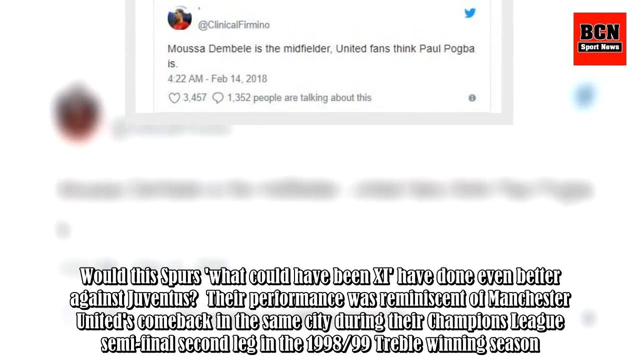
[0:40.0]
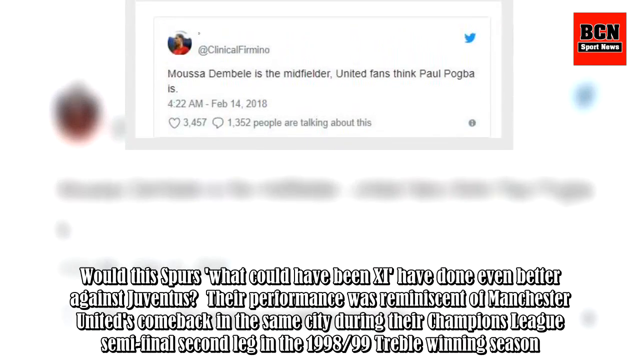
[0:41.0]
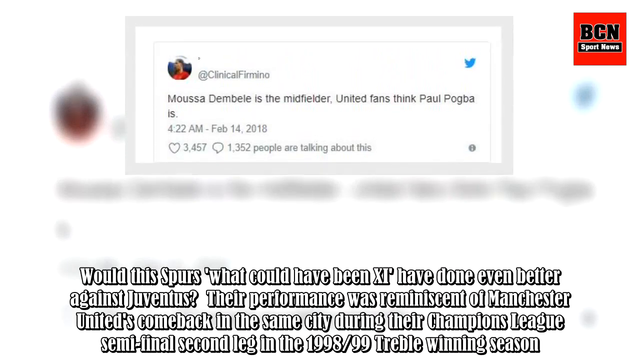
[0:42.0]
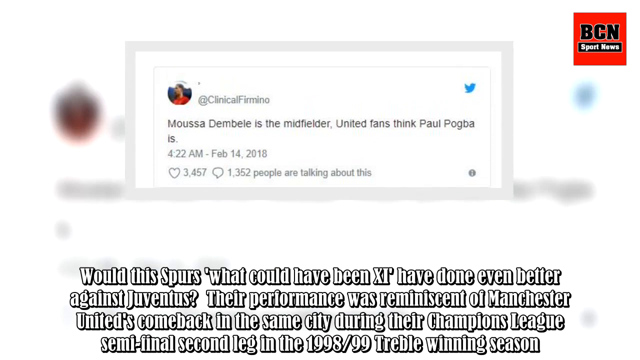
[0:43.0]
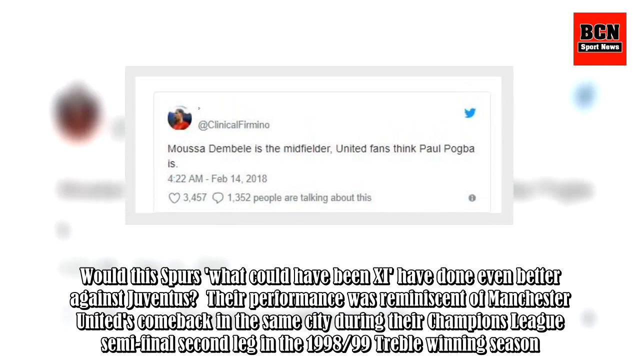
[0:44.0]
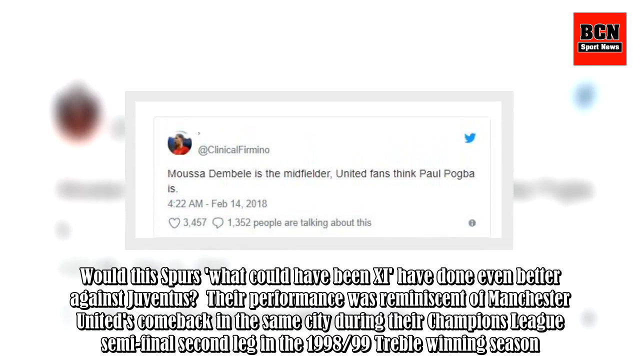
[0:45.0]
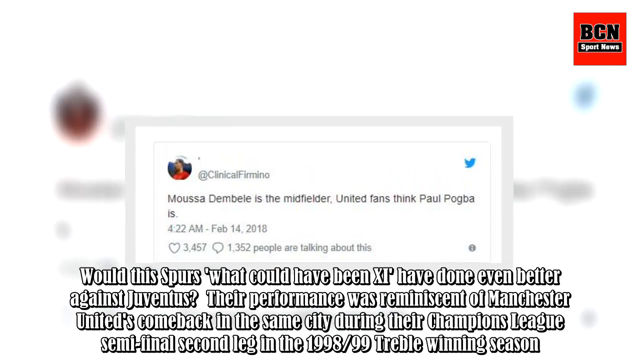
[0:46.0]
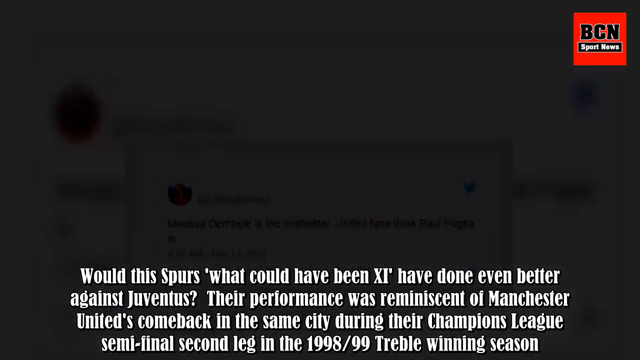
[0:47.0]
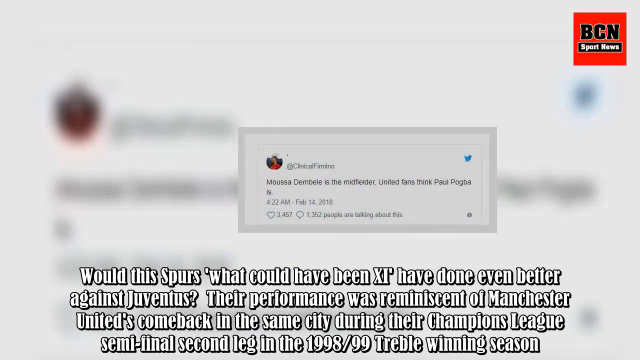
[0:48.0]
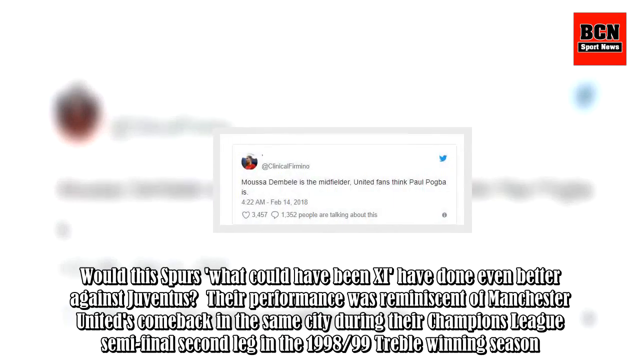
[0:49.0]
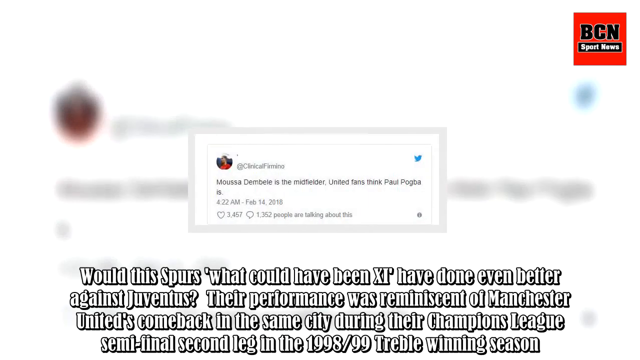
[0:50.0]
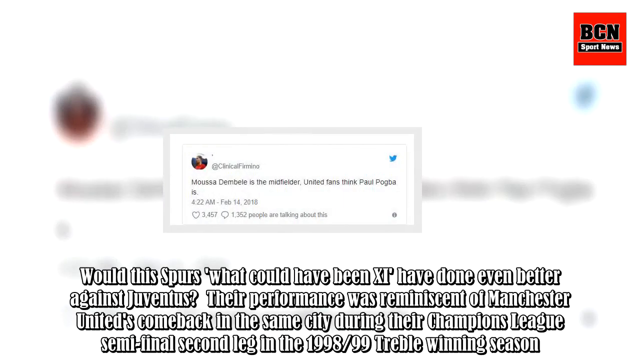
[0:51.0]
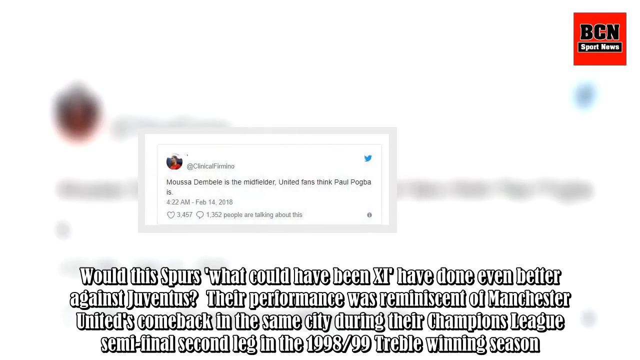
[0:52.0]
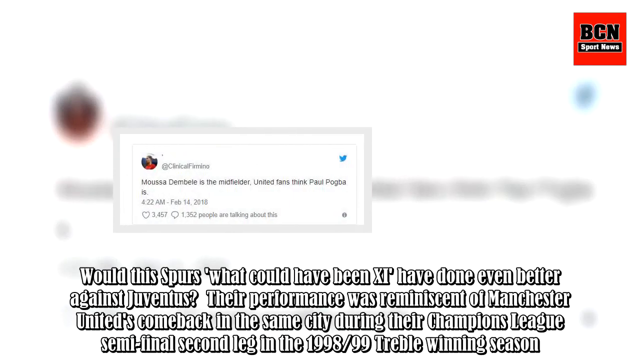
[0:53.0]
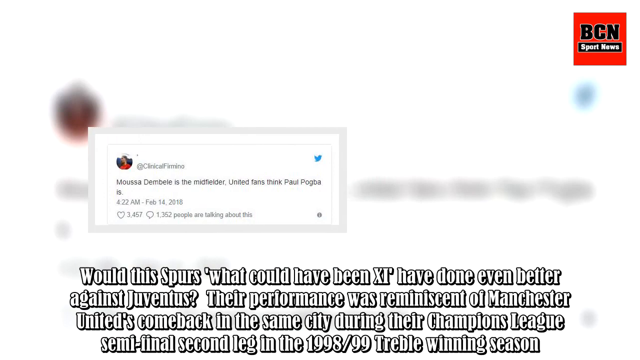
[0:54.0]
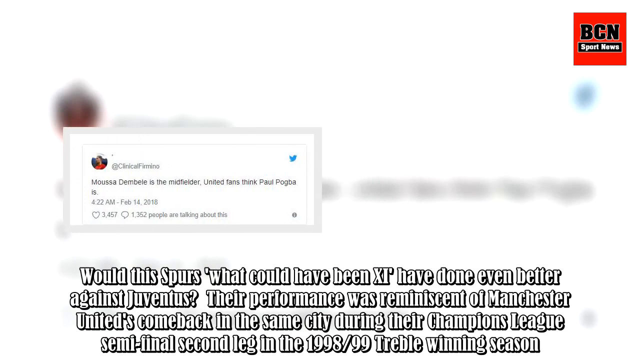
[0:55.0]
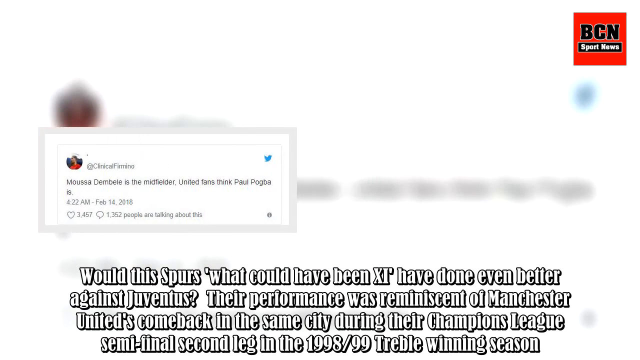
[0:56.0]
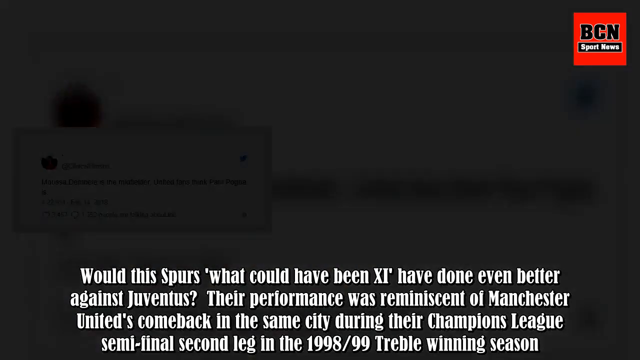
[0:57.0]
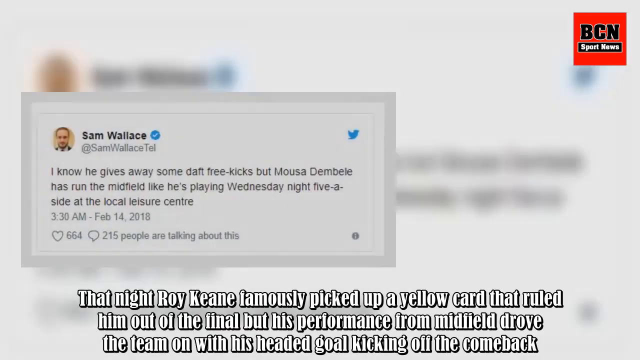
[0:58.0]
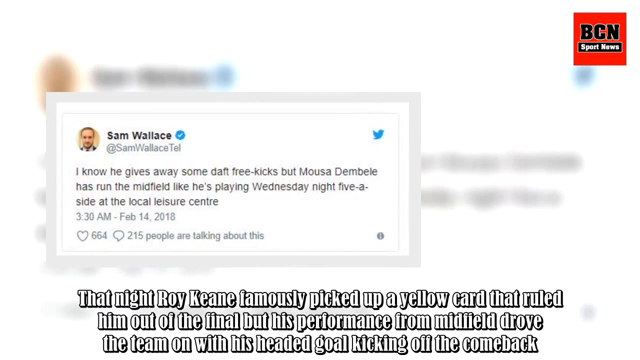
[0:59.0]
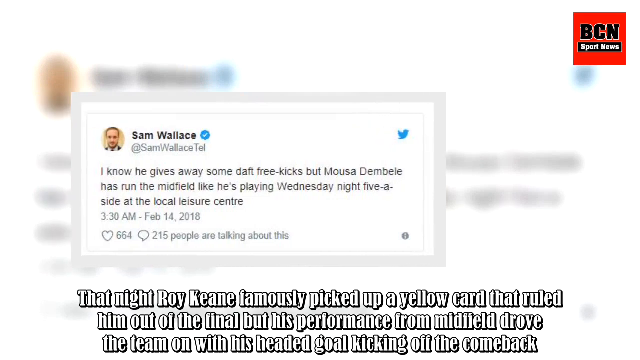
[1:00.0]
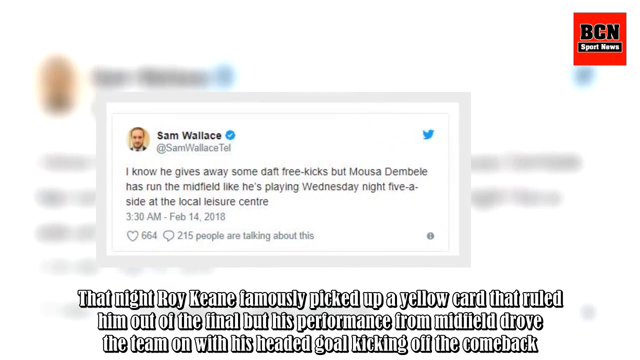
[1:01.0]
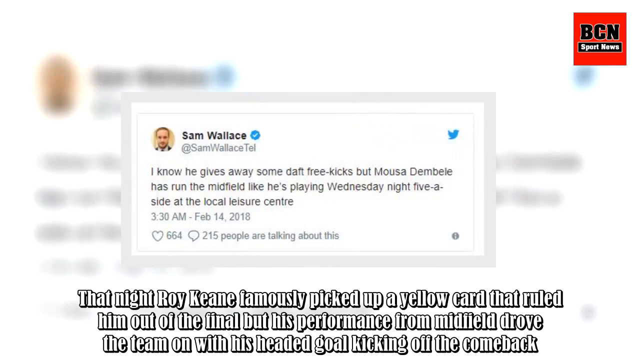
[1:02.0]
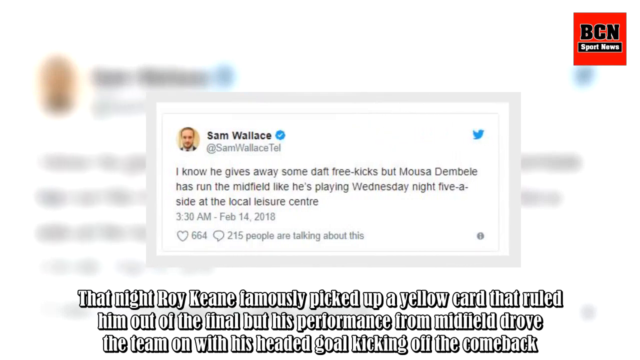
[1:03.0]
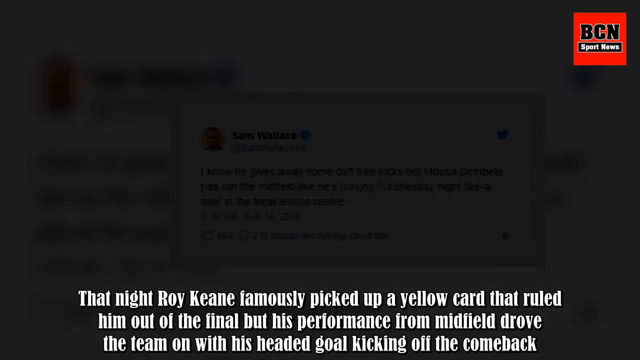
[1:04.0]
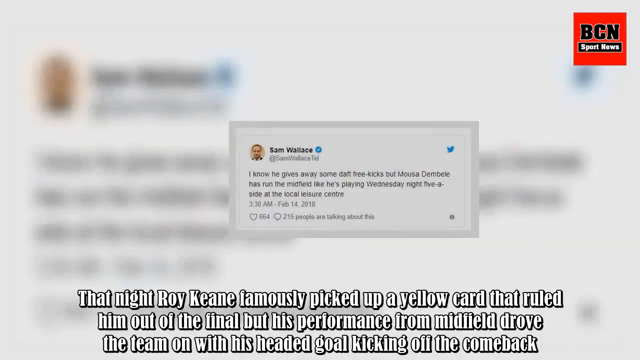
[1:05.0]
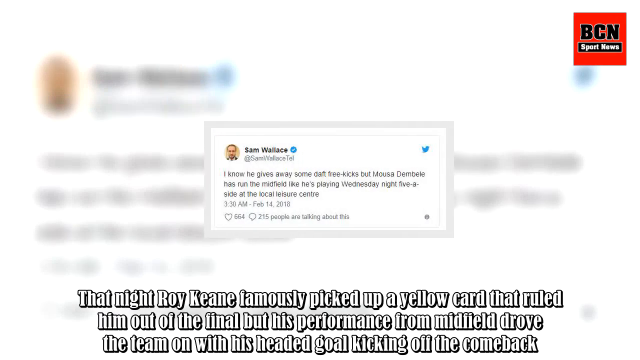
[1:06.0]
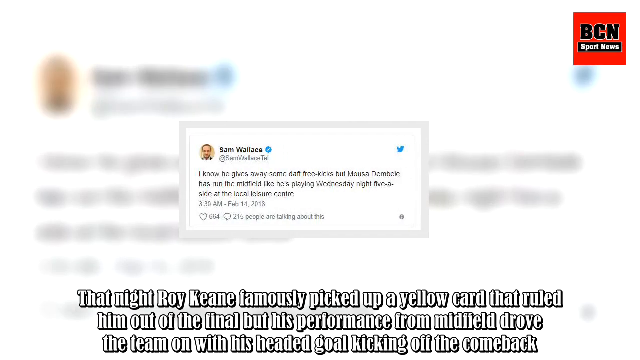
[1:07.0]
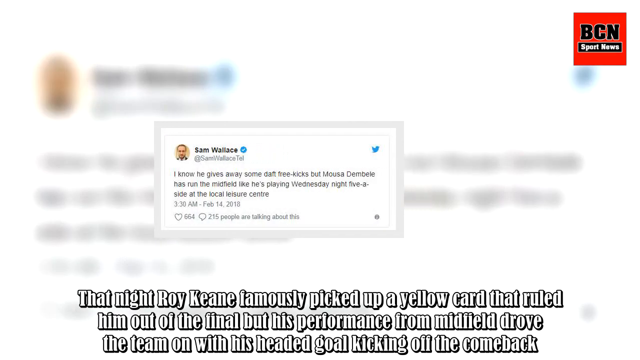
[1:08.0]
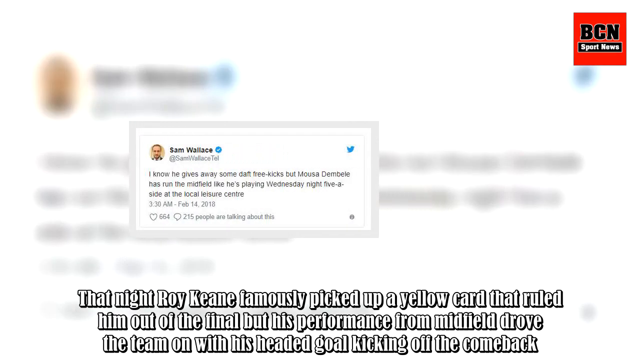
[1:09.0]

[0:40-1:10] Text reading "United fans think that Paul Pogba is" slowly moves across the screen. Below it, text reads "would the Spurs, what could have been 11, have done even better against Juventus? Their performance was reminiscent of Manchester United's comeback in the same city during their Champions League semifinal second leg in the 1998-99 treble-winning season." Next, Sam Wallace says "I know he gives away some daft free kicks, but Moussa Dembele has run the midfield like he's playing Wednesday night, 5-a-side at the local leisure center." Text below reads "that night, Roy Keane famously picked up a yellow card that ruled him out of the final, but his performance from midfield drove the team on with his headed goal, kicking off the comeback."